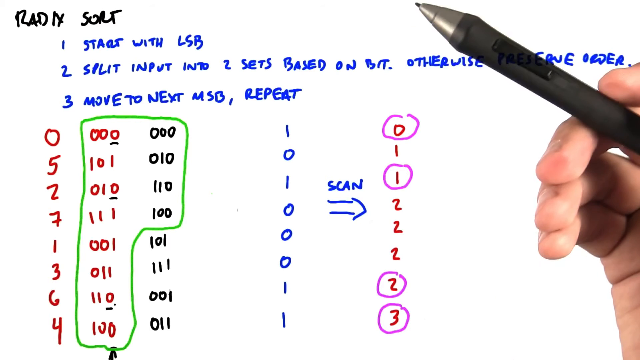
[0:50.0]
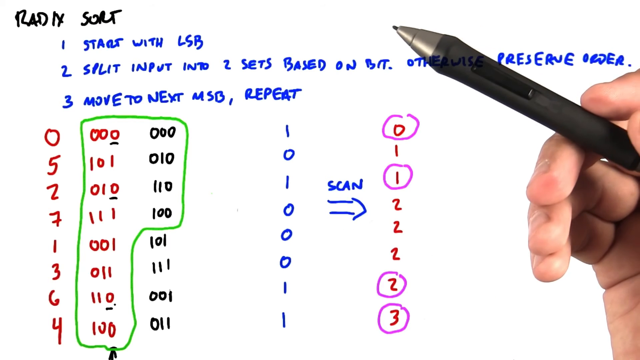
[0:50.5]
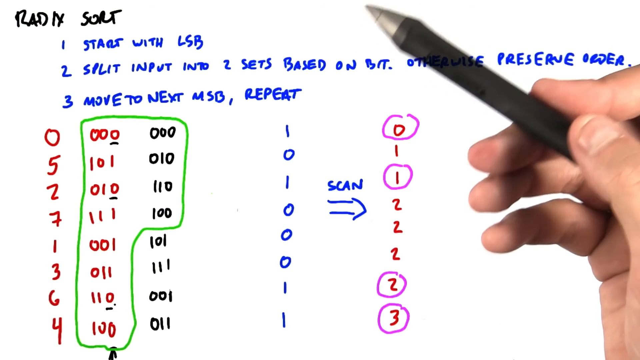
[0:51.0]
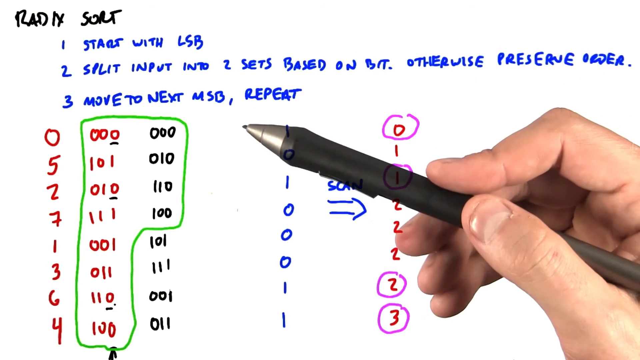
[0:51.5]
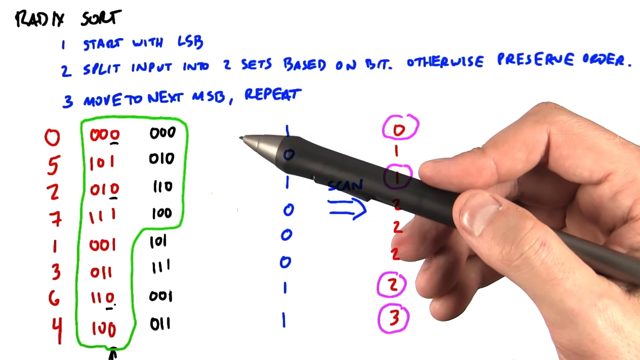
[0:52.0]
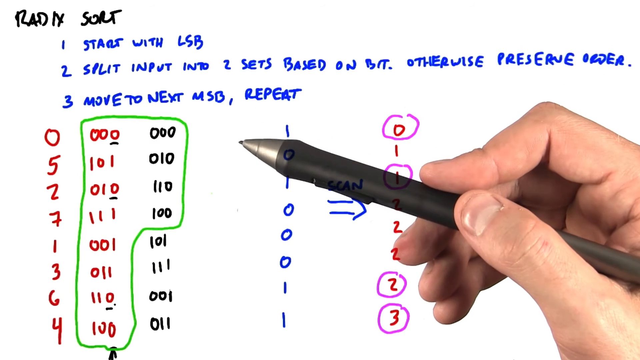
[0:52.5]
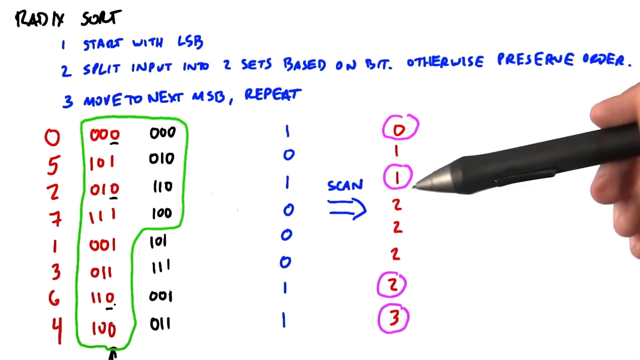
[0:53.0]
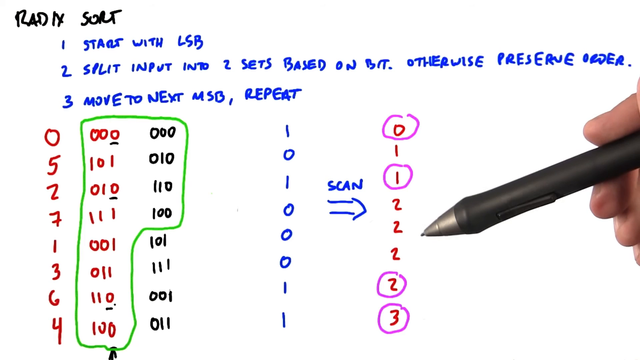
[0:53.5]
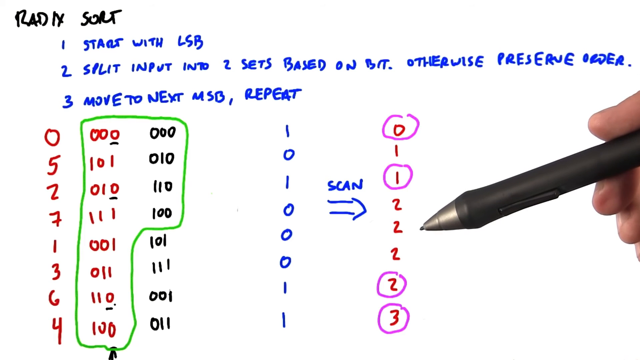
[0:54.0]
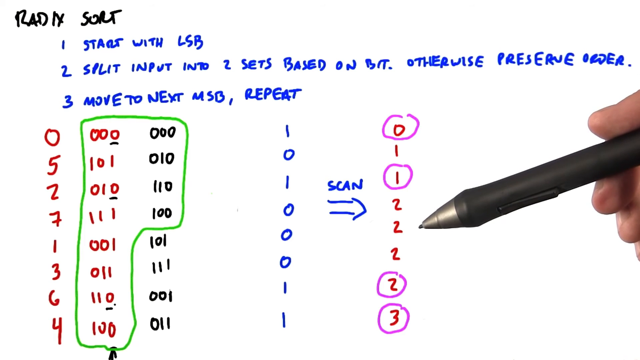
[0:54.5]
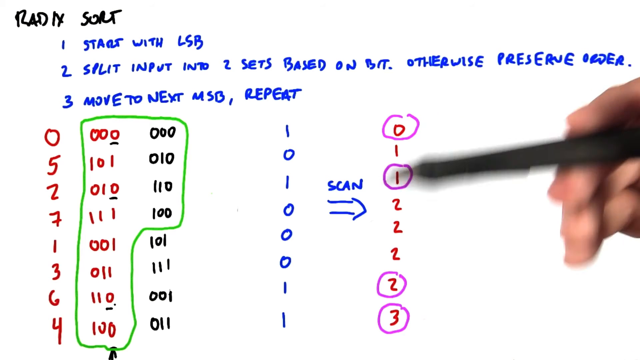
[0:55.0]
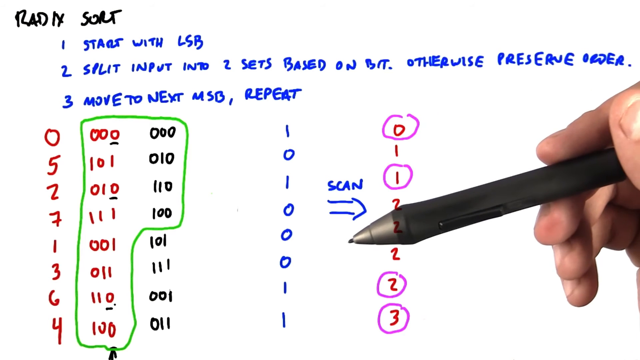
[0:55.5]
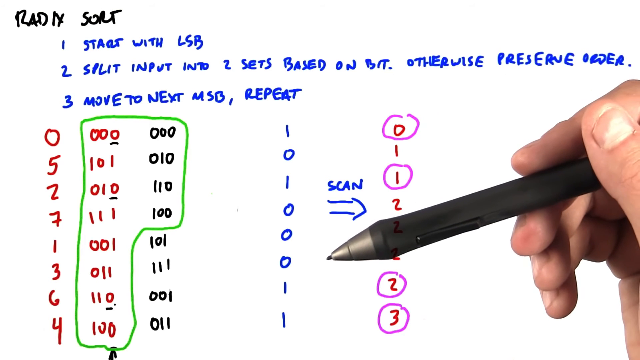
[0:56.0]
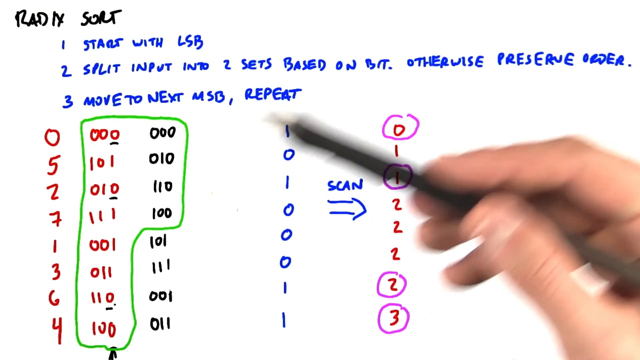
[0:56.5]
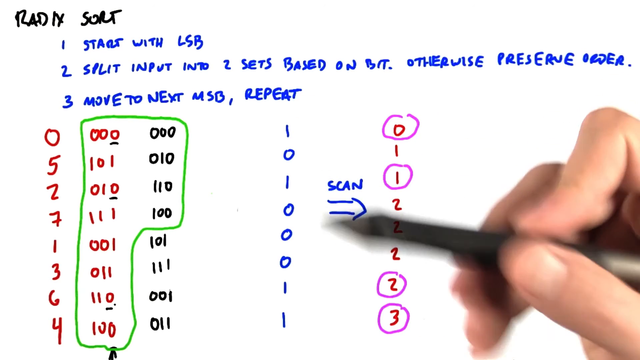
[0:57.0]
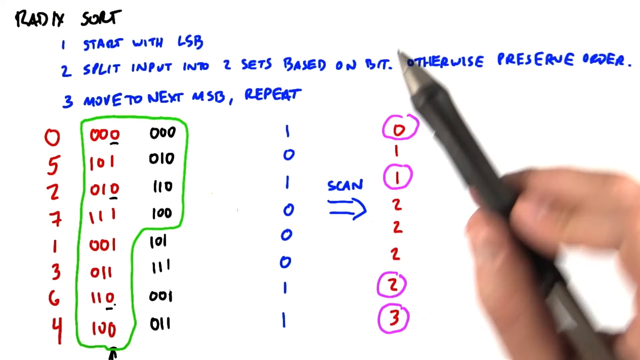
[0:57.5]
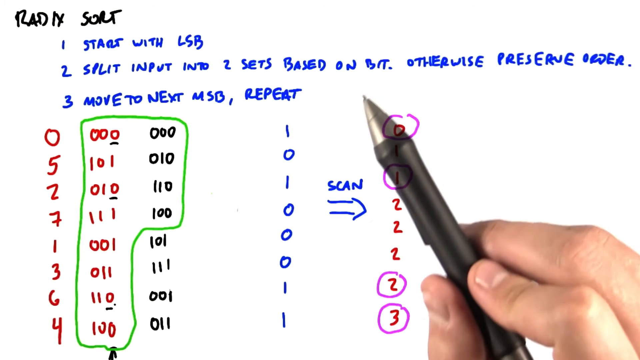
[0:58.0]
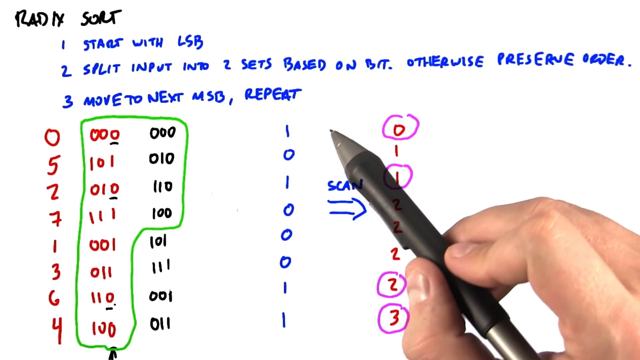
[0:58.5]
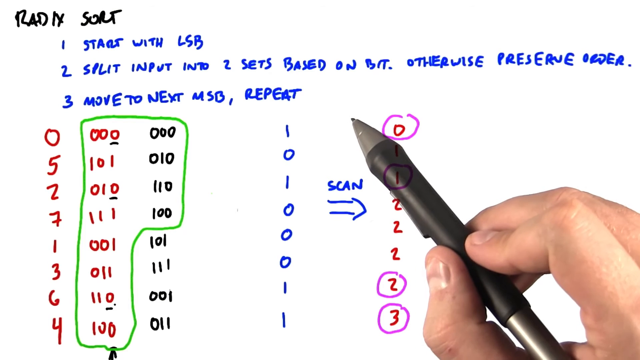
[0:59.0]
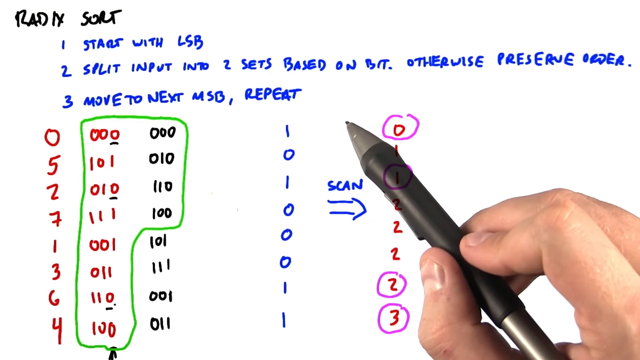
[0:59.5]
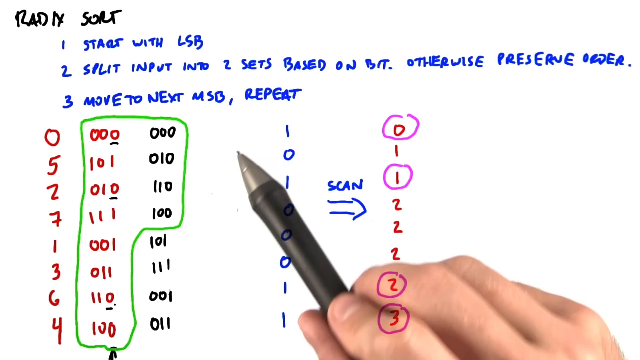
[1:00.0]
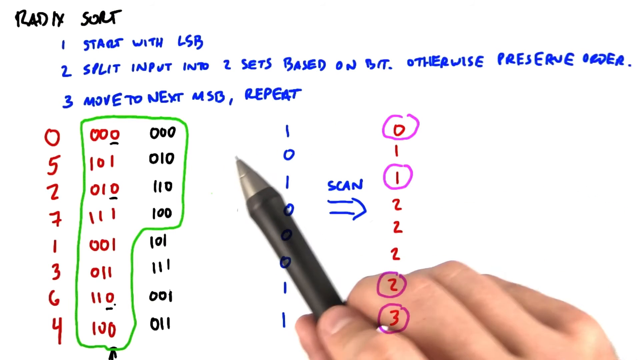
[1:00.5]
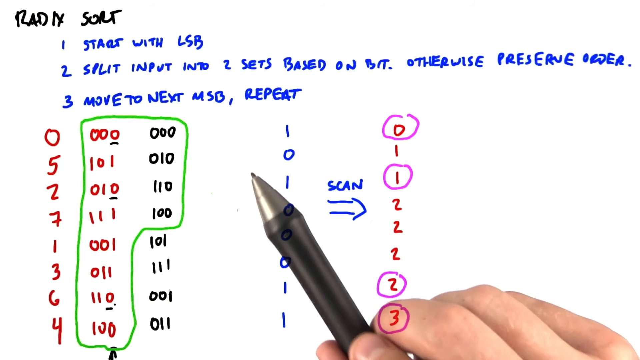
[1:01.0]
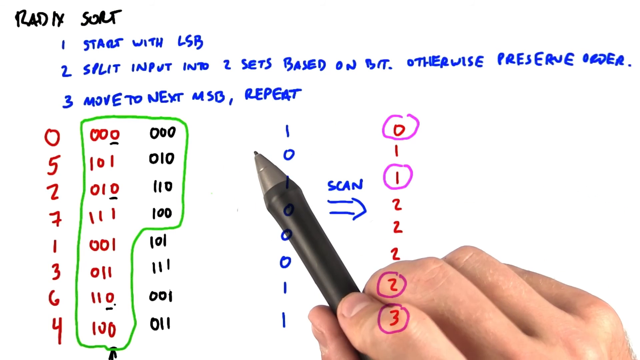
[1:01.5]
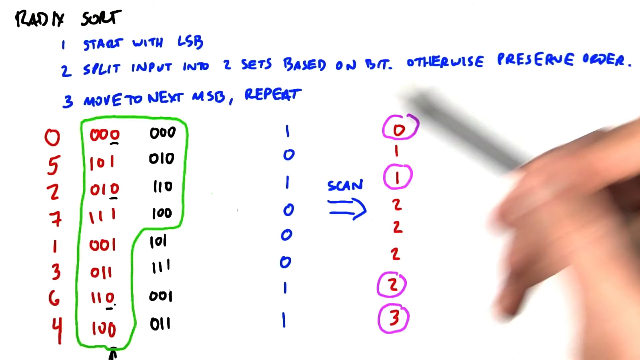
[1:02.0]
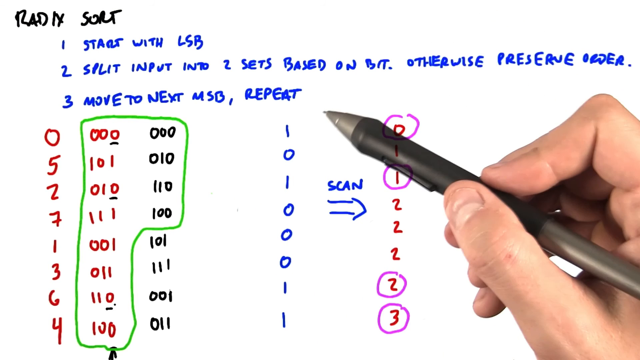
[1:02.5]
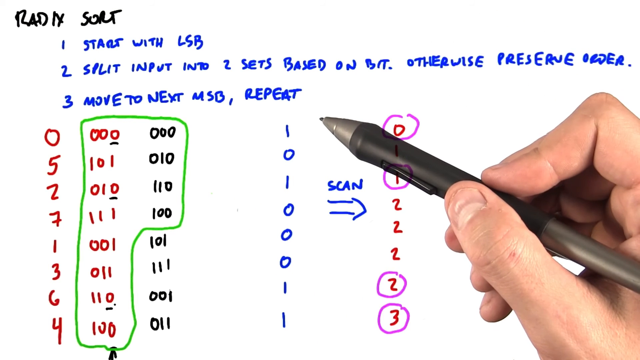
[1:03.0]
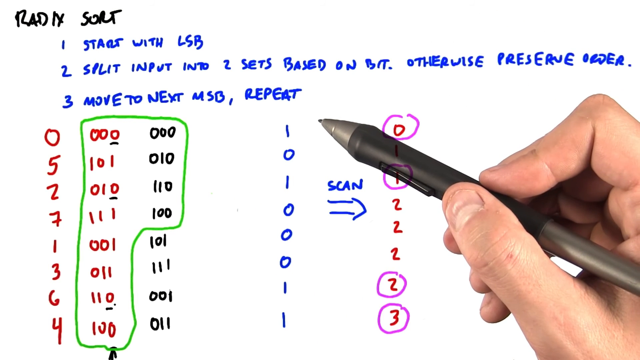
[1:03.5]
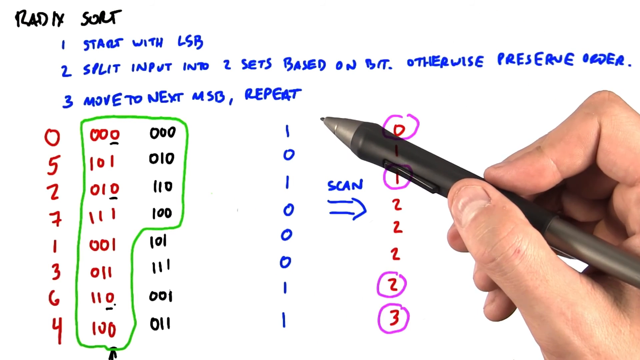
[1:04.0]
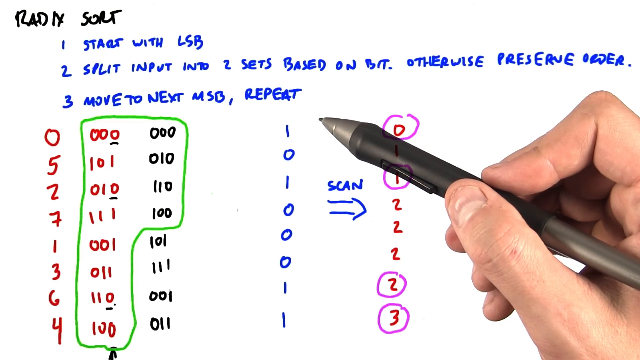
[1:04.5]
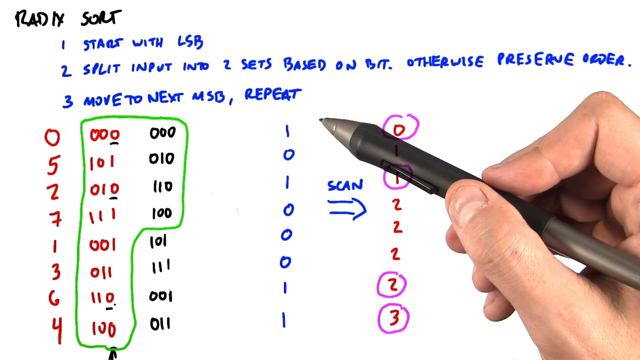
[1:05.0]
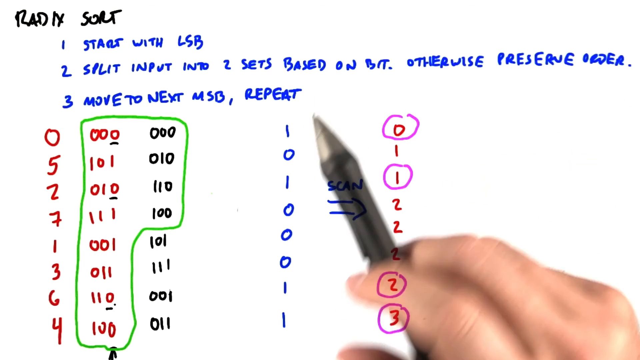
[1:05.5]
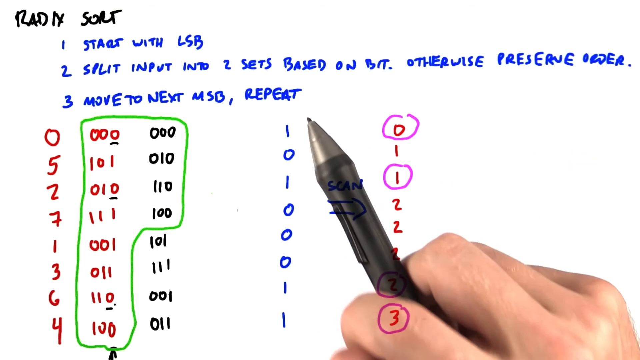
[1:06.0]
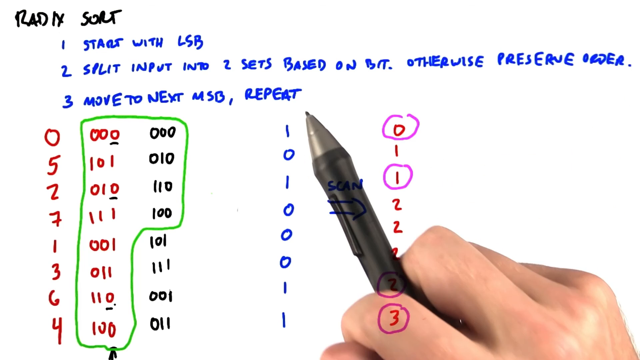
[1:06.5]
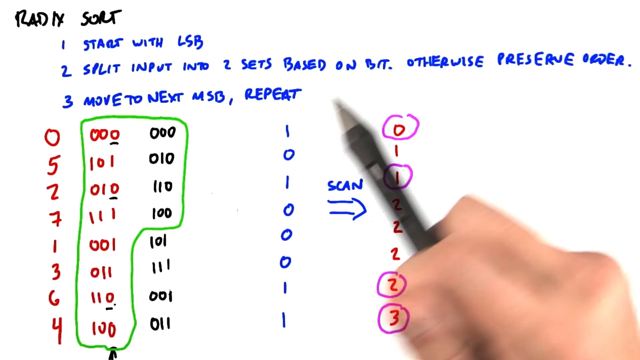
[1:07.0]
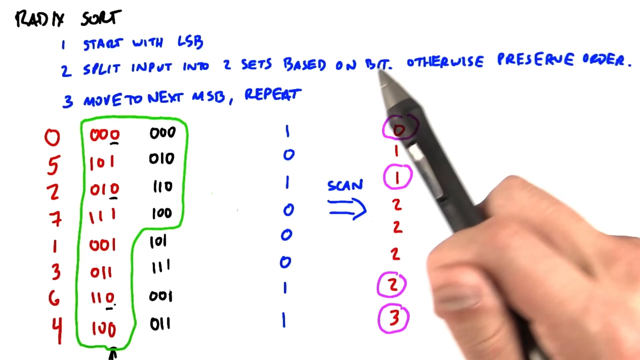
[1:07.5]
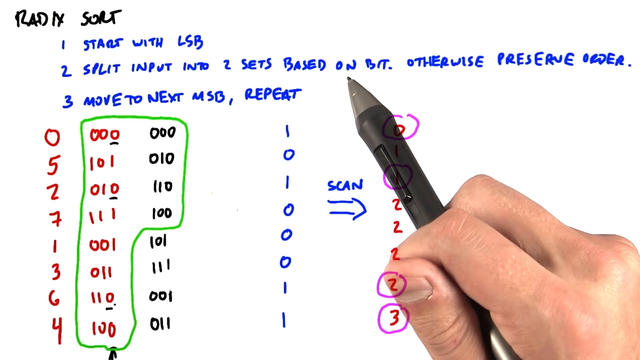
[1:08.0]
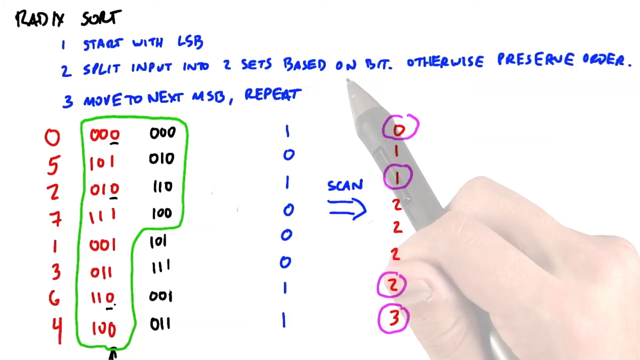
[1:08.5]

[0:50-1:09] Someone is working on a math problem, their hand on the right side of the screen holding a stylus that looks like a pen. They use its point to point out different areas of the chart they have made, mainly the column of numbers on the right, but they also look at the top of the blue column of numbers in the middle, which reads 1, 0, 1, 0, 0, 0, 1, 1. The last column is written in red, with some of the numbers circled in purple. Between the red column and the blue column is the word "scan," with an arrow pointing to the right over to the red column. At the top of the screen is a list in blue, numbered one, two, three, with the list items to the right of the numbers: number one is "start with LSB" and number three is "move to next MSB repeat."